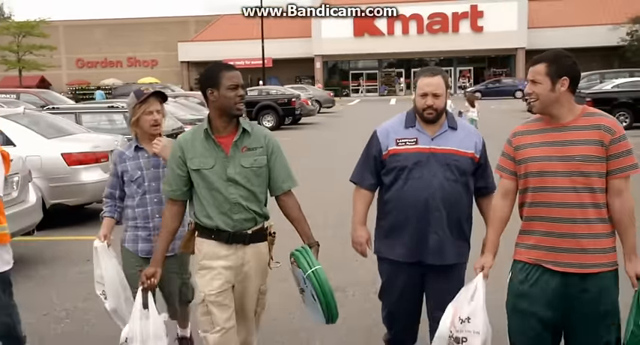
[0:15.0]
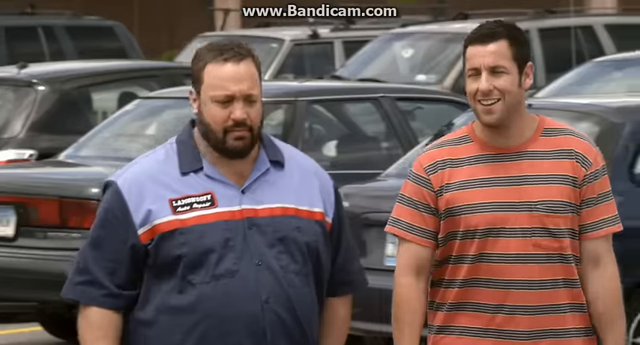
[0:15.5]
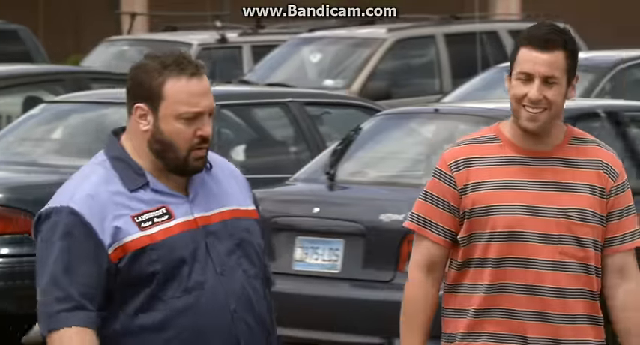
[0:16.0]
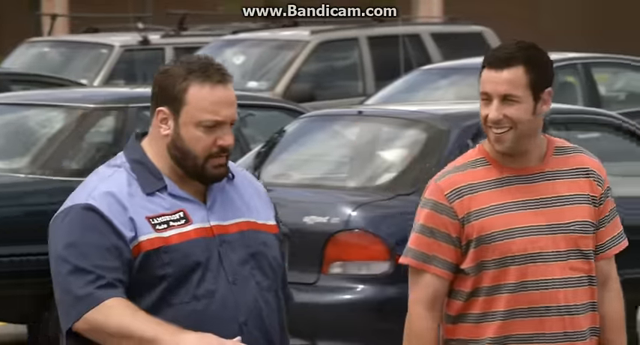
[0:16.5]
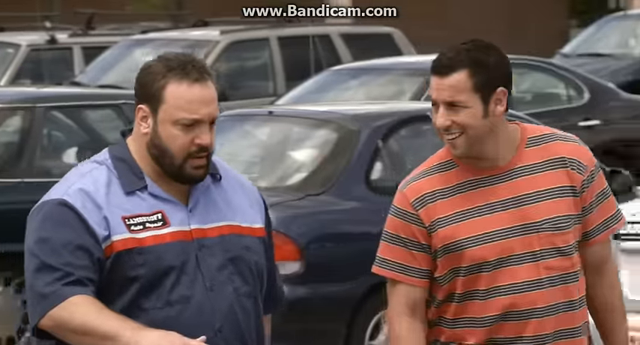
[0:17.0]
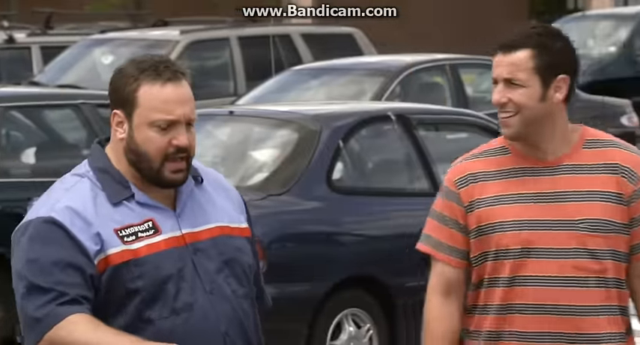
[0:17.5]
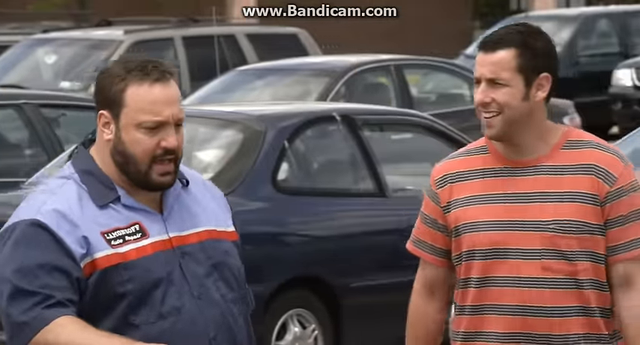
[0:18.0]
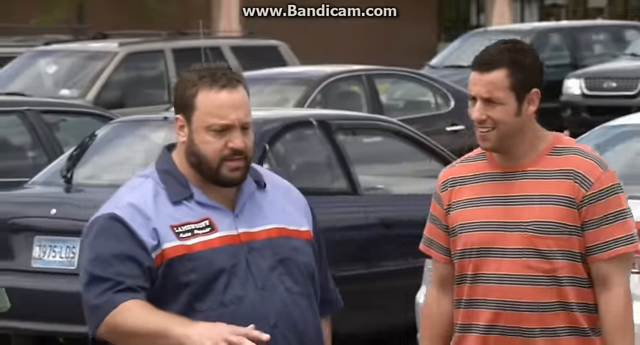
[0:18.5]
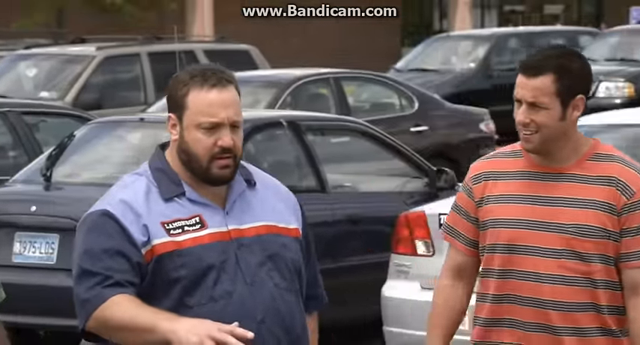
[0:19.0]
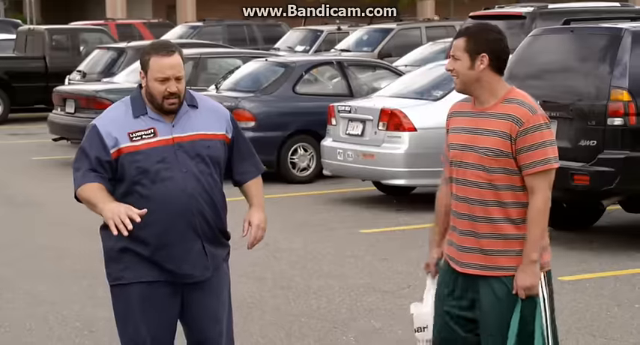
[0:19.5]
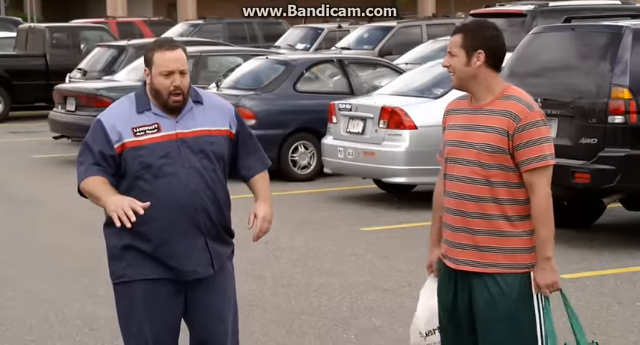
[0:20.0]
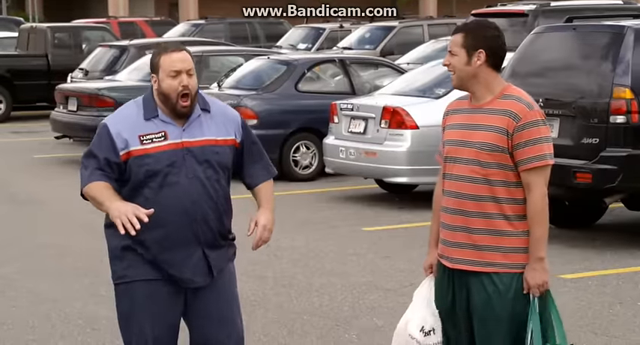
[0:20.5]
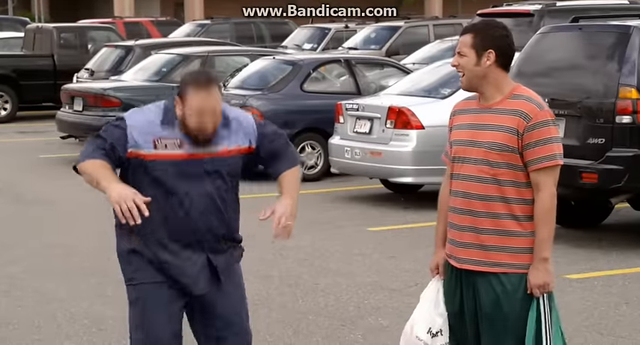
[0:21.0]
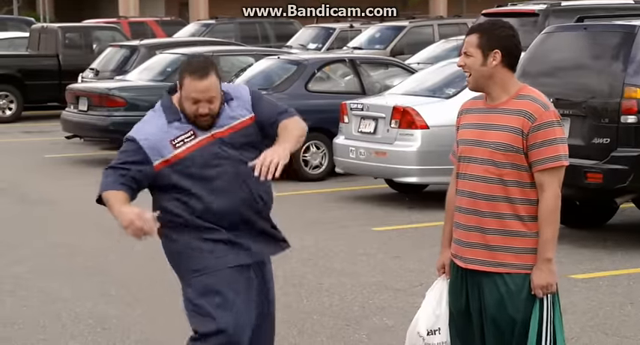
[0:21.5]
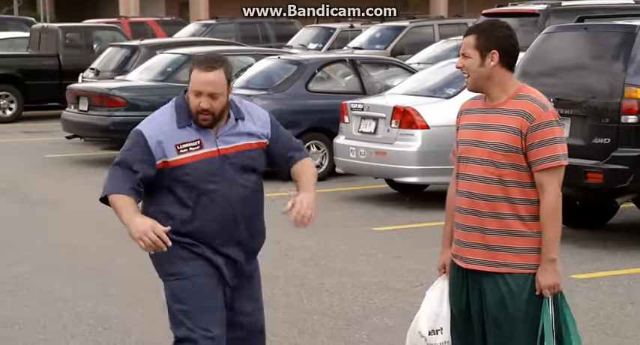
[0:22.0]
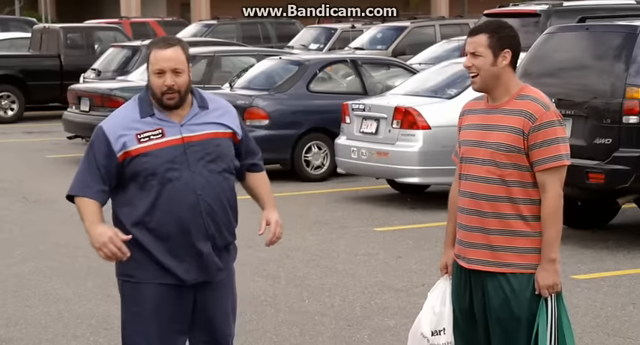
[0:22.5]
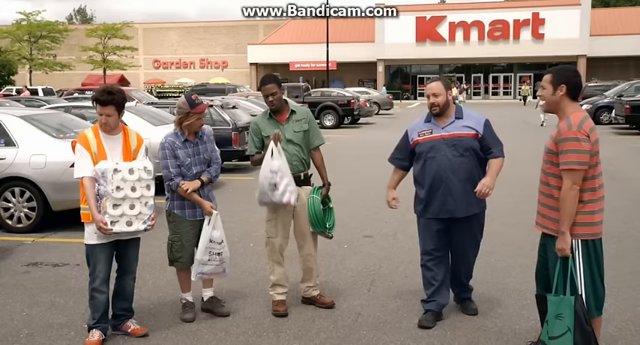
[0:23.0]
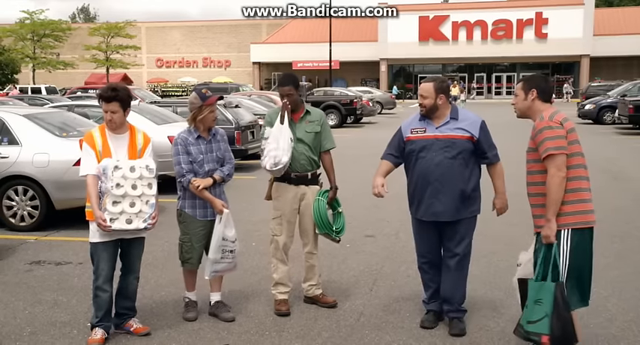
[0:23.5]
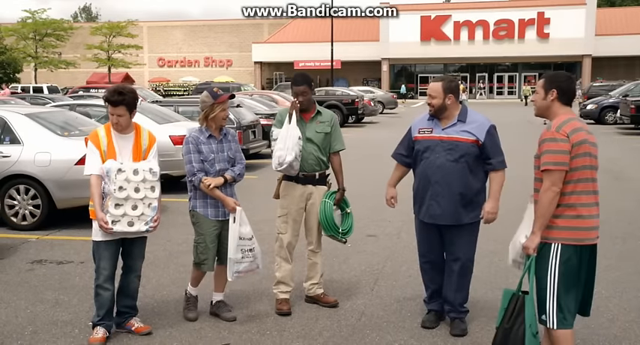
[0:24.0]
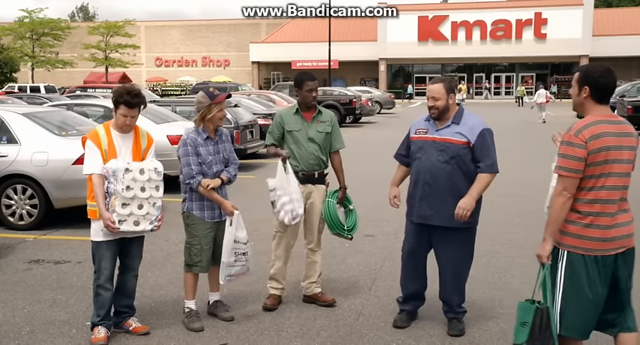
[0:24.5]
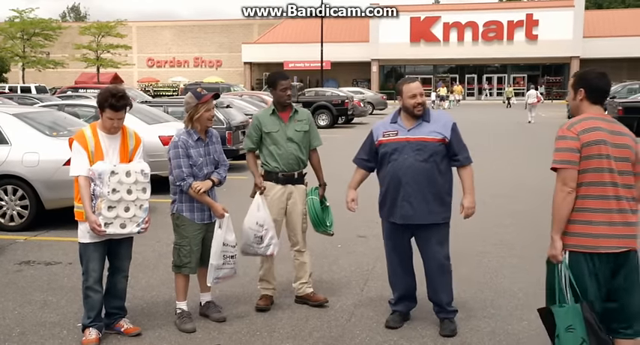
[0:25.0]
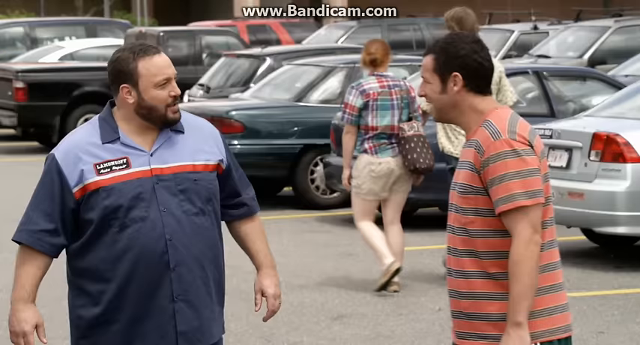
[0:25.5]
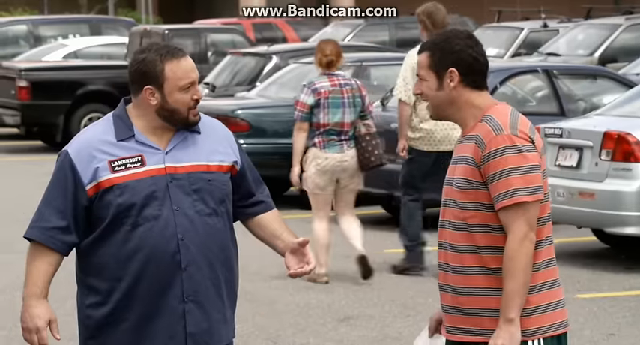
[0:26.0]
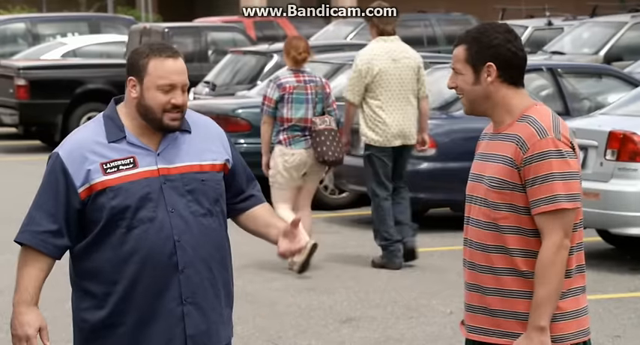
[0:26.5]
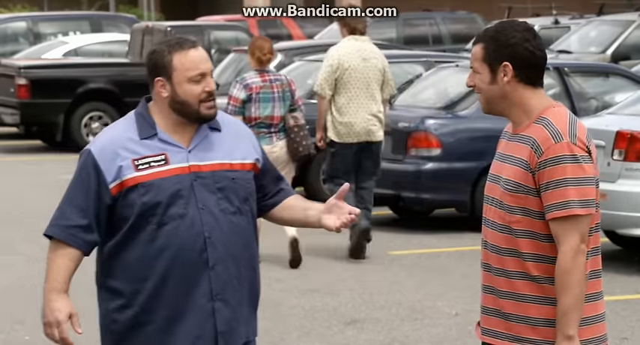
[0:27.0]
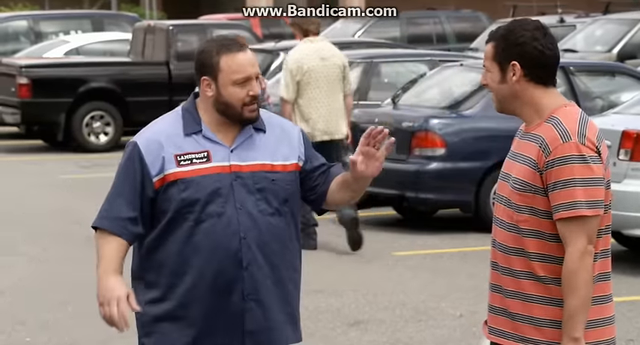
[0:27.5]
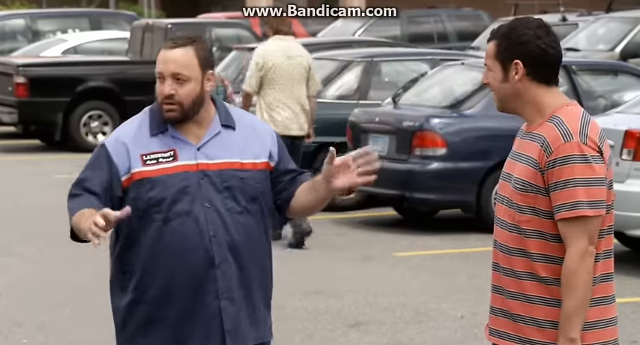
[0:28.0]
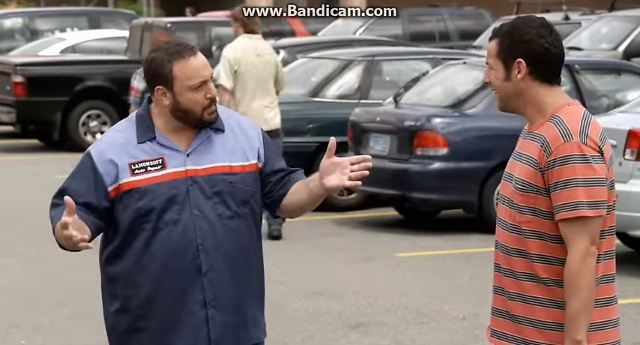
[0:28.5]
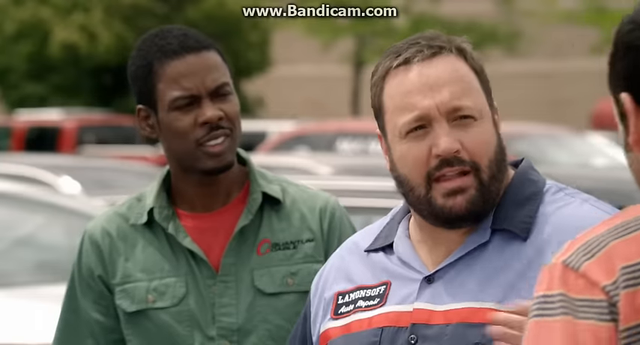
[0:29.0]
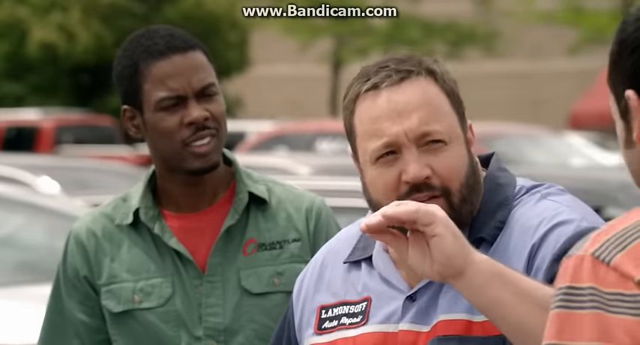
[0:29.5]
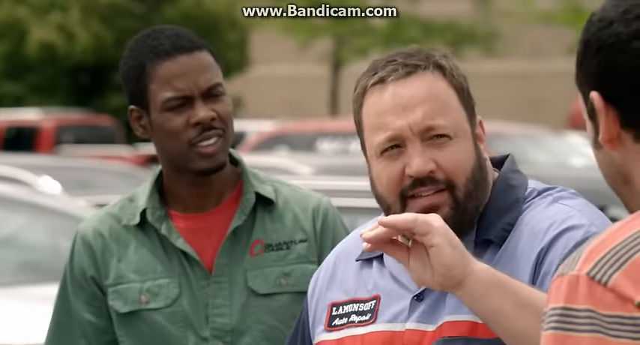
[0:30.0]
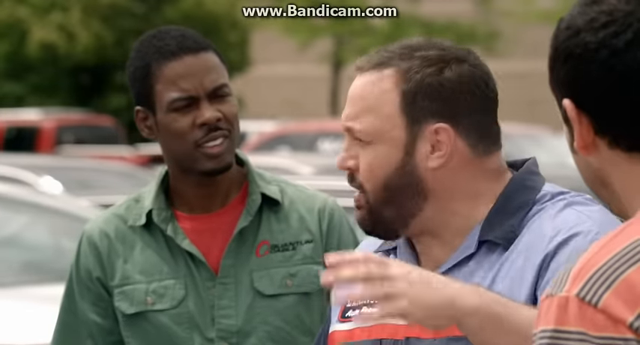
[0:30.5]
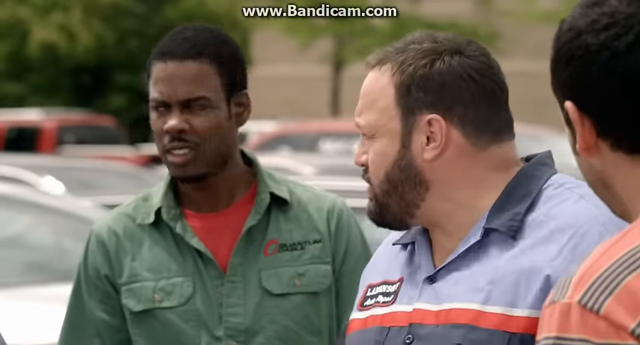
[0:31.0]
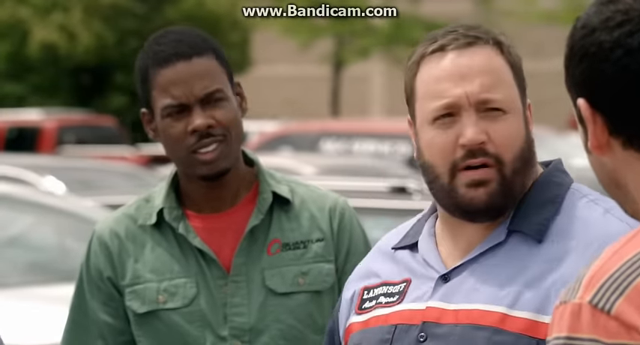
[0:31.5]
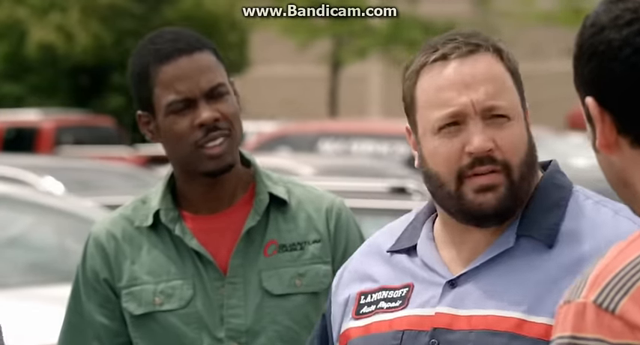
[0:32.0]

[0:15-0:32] A mother pushes a shopping cart through the parking lot of a shopping center or Kmart; she seems quite harassed and shouts at her four red-headed children. One sits in the cart, another hangs on to the end of the cart, and a boy and a girl run around and around it. The camera pans to a group of men walking in the opposite direction to the woman. Adam Sandler wears a checked shirt. To his right is the actor from the sitcom The King of Queens, and to his right is the comedian Chris Rock, holding a coiled garden hose. Next to him is David Spade in short pants and a baseball cap. On David Spade's right is a dark-haired man holding a huge jumbo pack of toilet rolls and wearing a neon orange safety vest like those worn by road construction workers. The shot returns to the actor from The King of Queens: he stops, gets a strange look on his face, and his leg does a funny wiggle. Everybody looks at him as if very shocked, and he then seemingly tries to explain to them what is going on with his leg. The shot moves to a yellow school bus, and a very tall black policeman comes around from behind the side of the bus.